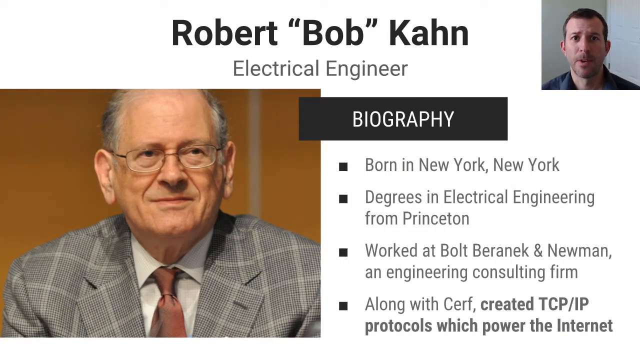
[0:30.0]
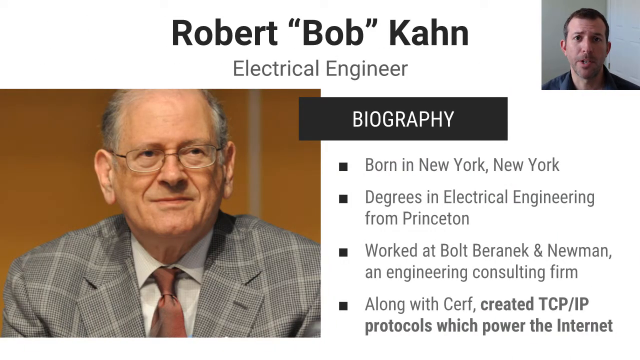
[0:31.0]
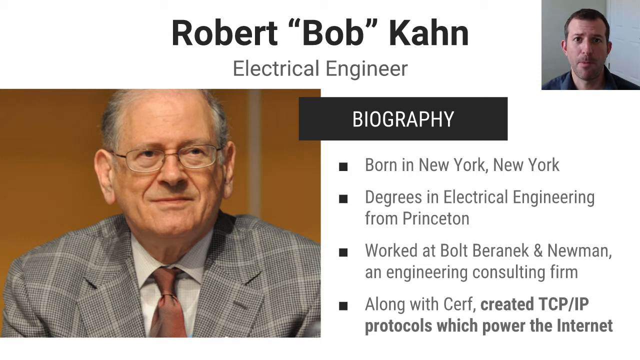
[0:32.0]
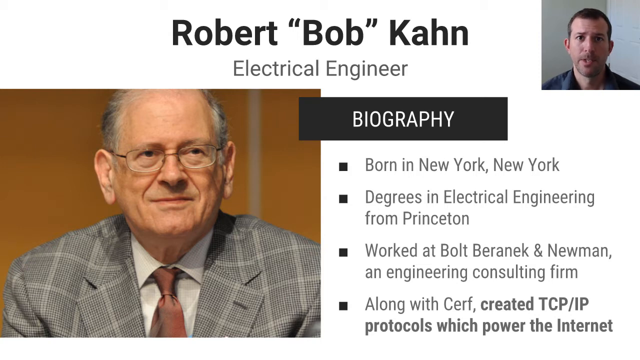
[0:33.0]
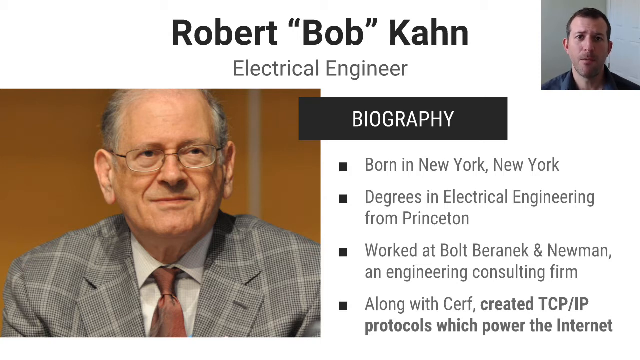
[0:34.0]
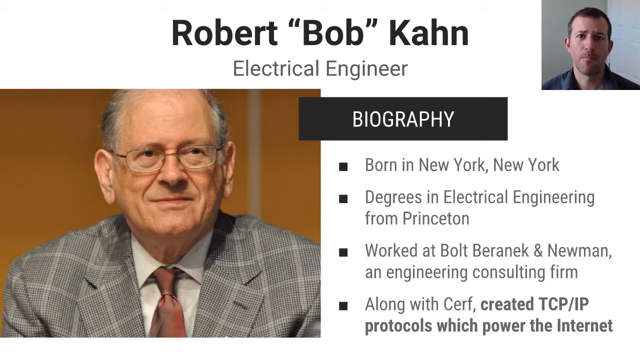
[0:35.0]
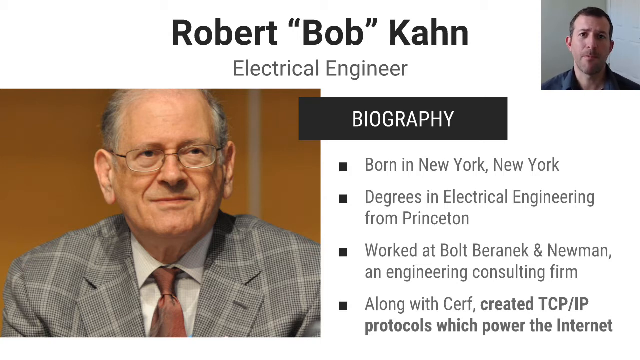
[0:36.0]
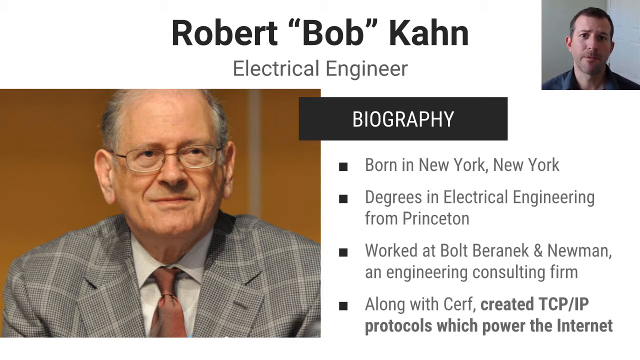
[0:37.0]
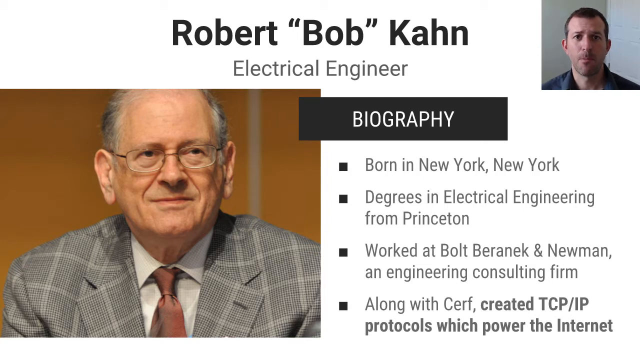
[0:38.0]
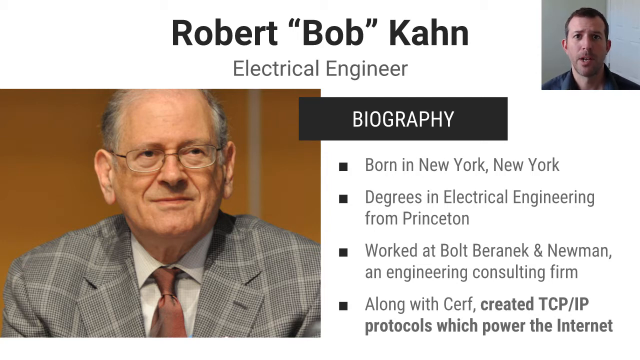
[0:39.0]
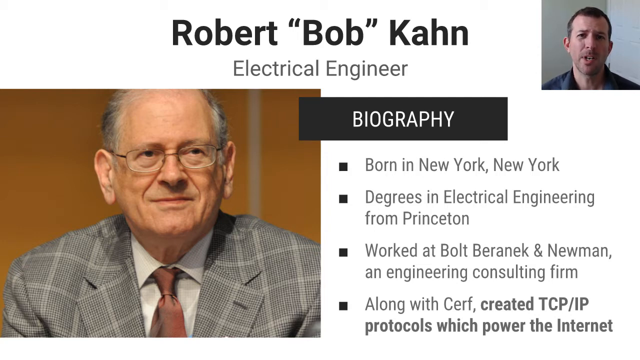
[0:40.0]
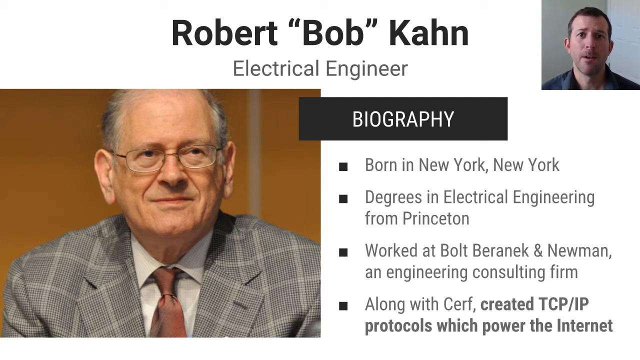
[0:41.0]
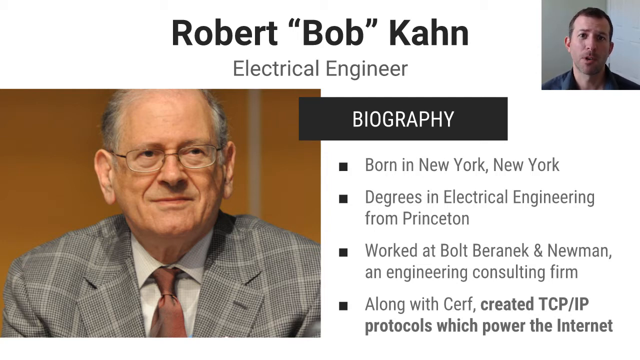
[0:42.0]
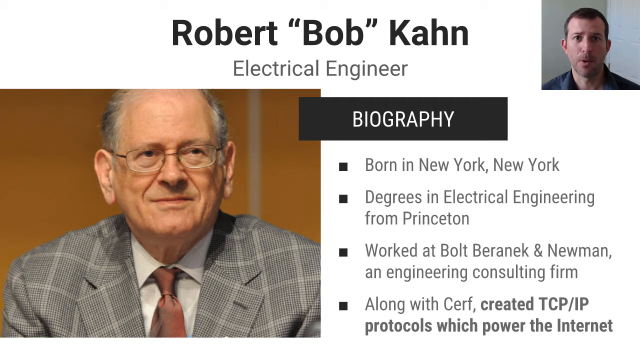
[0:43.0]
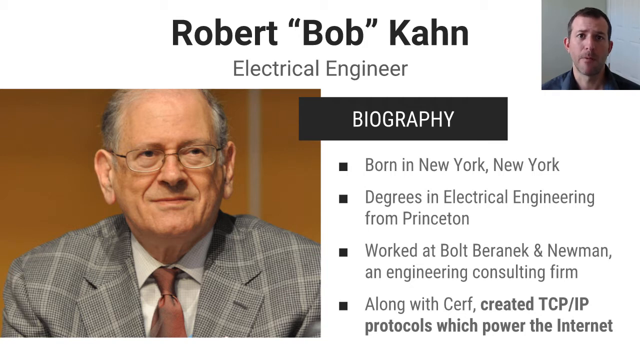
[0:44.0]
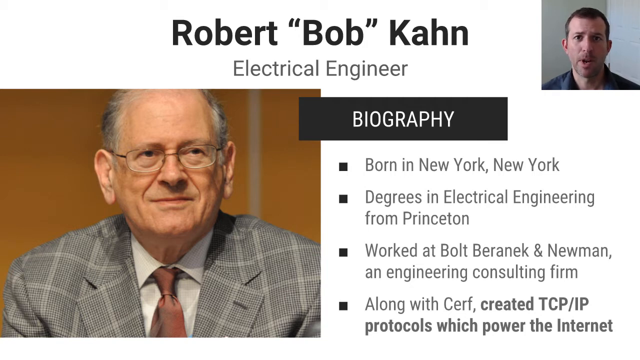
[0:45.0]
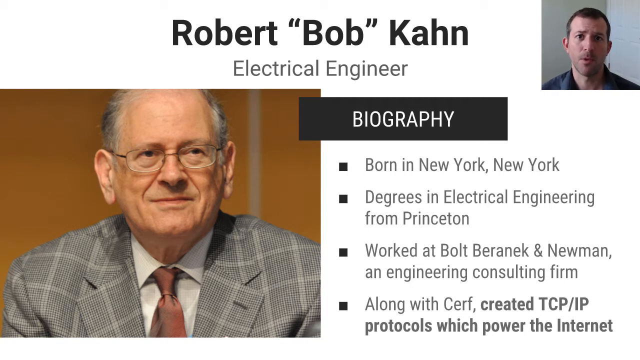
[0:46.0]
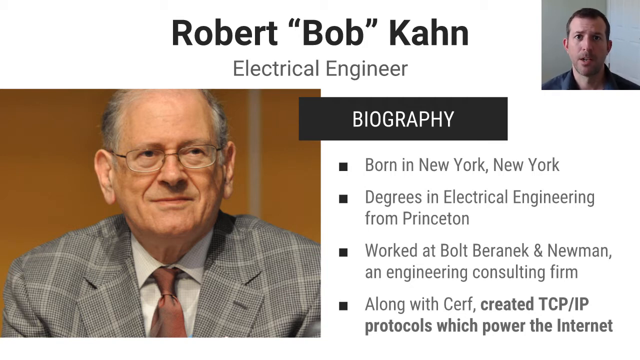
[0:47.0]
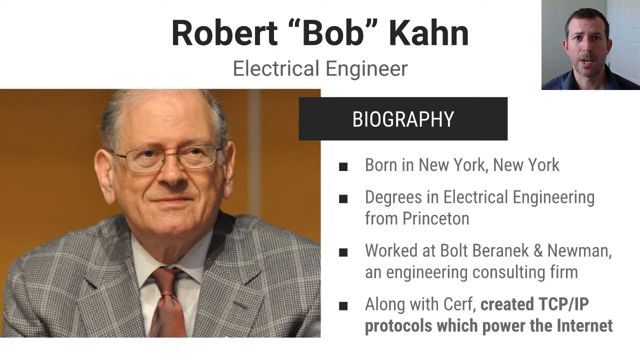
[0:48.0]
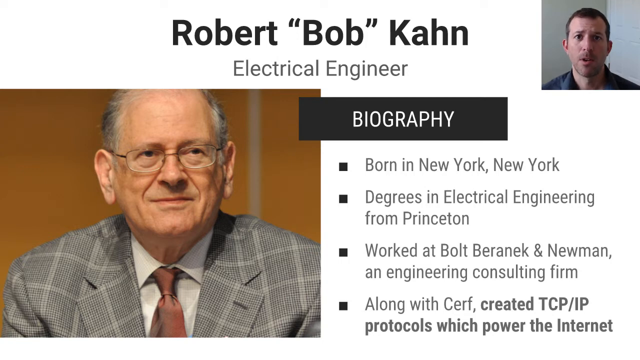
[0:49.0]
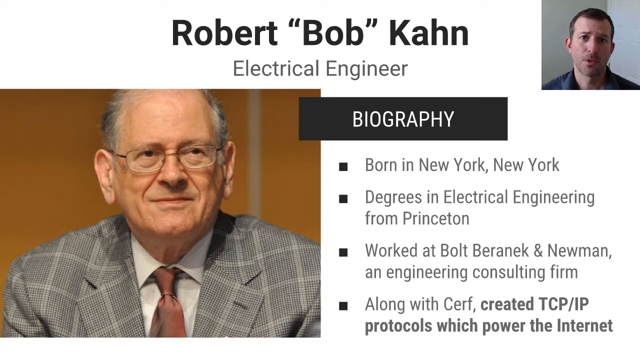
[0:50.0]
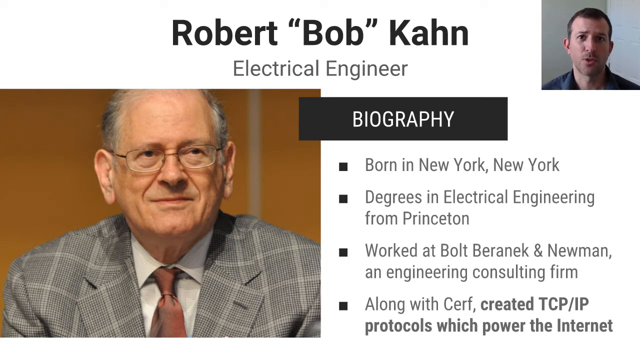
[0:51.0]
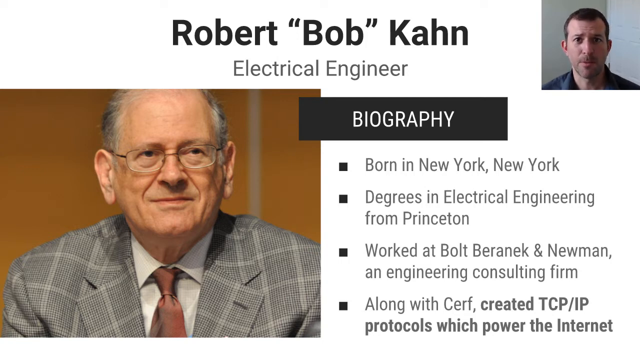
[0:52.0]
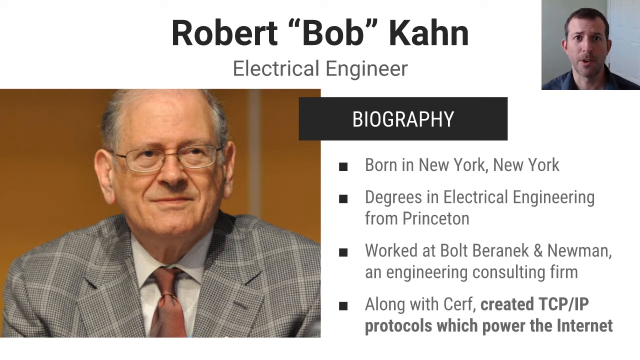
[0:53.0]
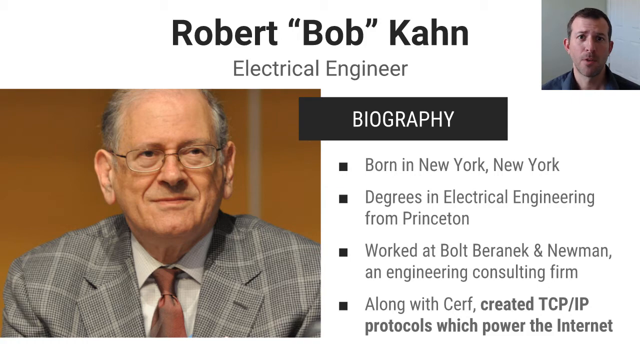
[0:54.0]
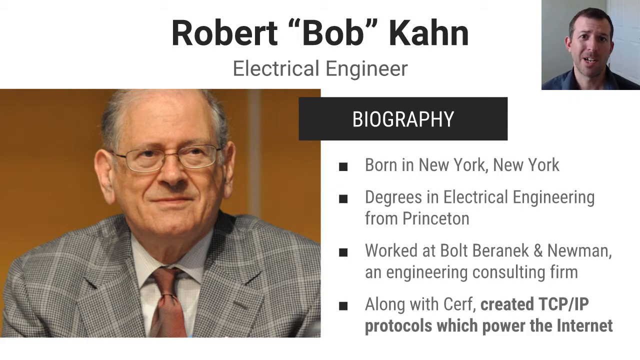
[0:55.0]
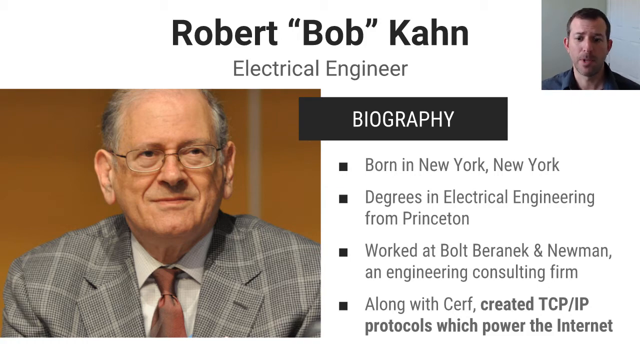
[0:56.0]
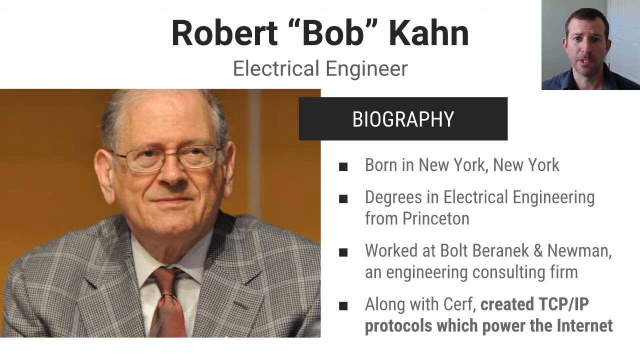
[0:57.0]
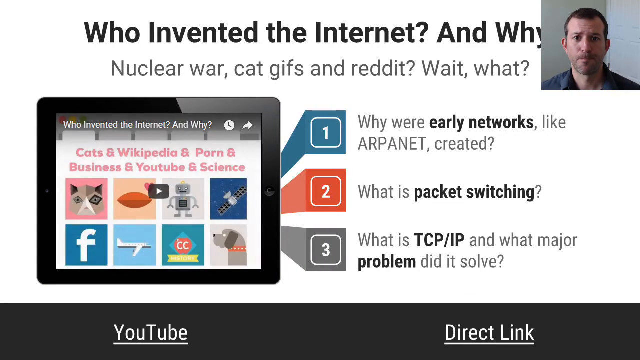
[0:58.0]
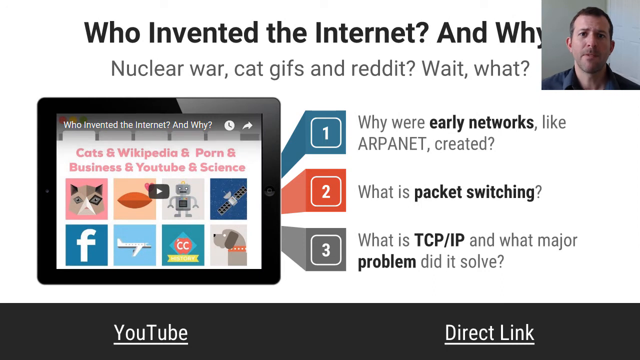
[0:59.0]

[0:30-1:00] A slideshow slide occupies the main part of the screen, with a square video of a man narrating the slide inserted in the top right. On the left of the slide, a square box holds a photo of a man sitting against an orange background. He has short grey hair and is mostly bald, wears glasses and has a partial smile, and is dressed in a grey suit with large check lines, a white shirt and a red tie. To the right, level with the top of his photo, a black text box reads "Biography" in white capital letters, with bullet points of details about the man beneath it. Above his photo is his name: "Robert Bob Kahn, electrical engineer". Another slide then appears from the left side of the screen, moving quickly towards the right. Its title reads "Who Invented the Internet and Why? Nuclear War? Cat GIFs and Reddit? Wait, what?" Beneath it is a picture of a computer monitor showing an image. Three lines come out of the right side of the monitor, looking like three spotlights, one blue, one red and one grey, numbered 1, 2 and 3. Beside each line is a question.